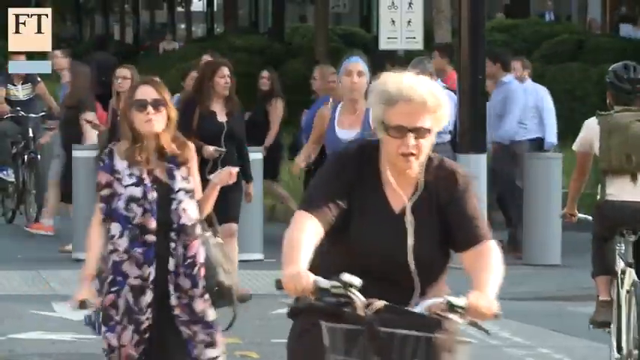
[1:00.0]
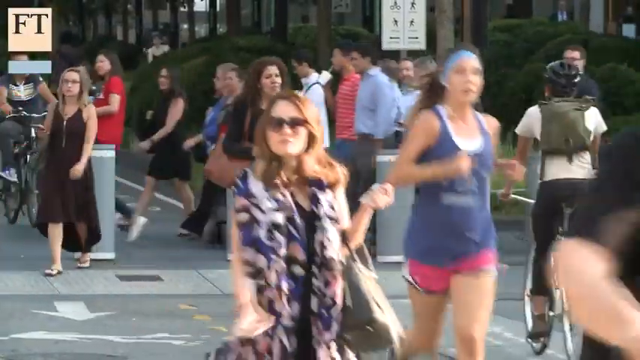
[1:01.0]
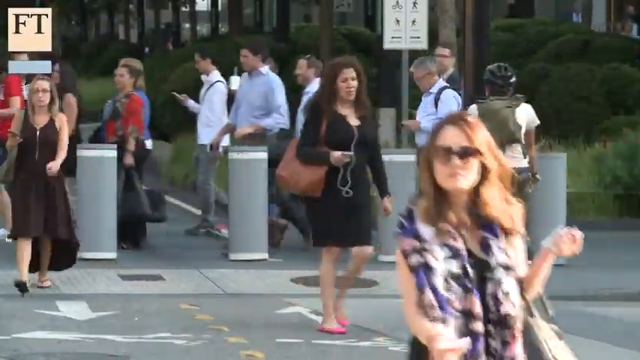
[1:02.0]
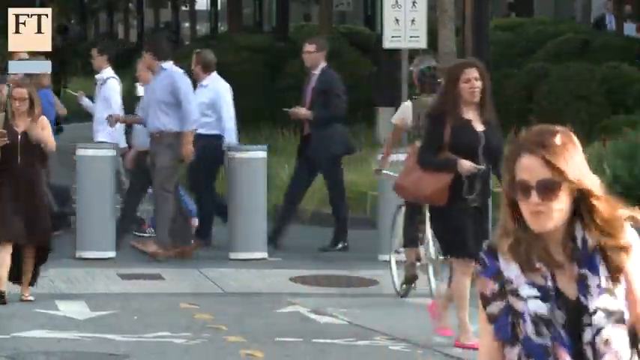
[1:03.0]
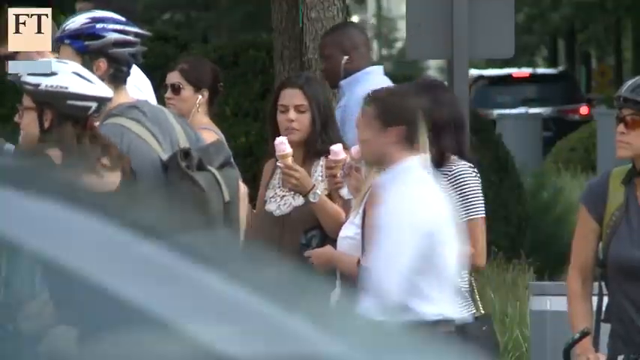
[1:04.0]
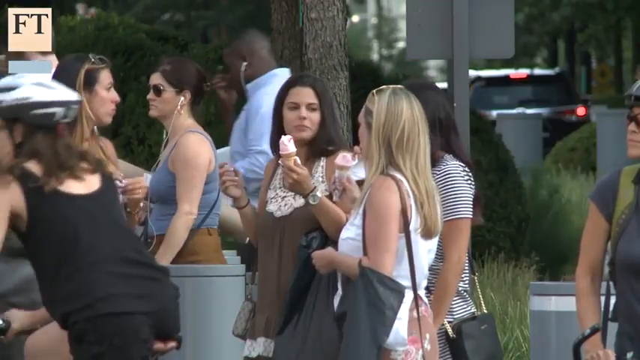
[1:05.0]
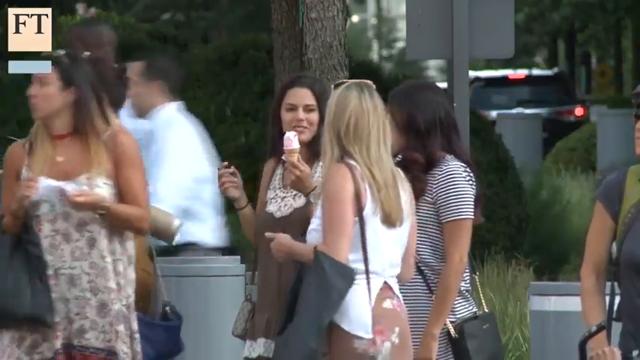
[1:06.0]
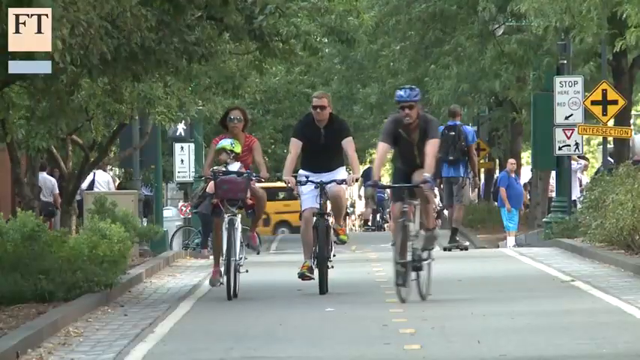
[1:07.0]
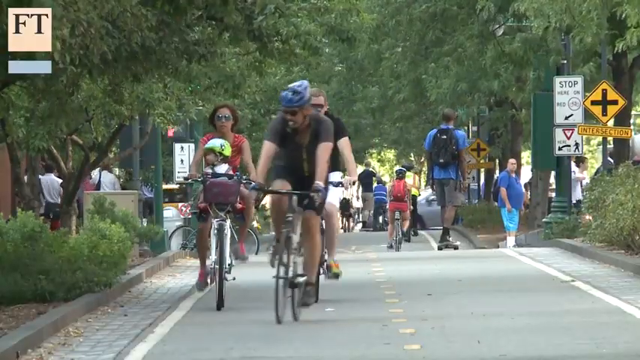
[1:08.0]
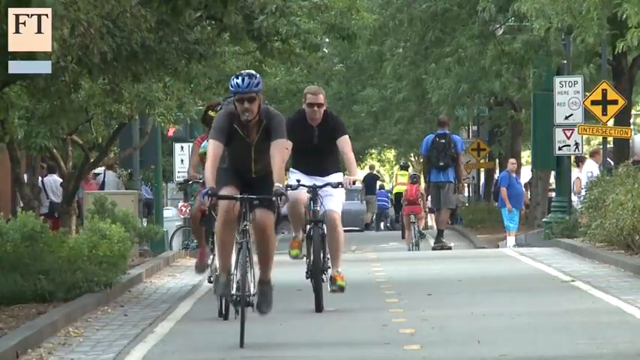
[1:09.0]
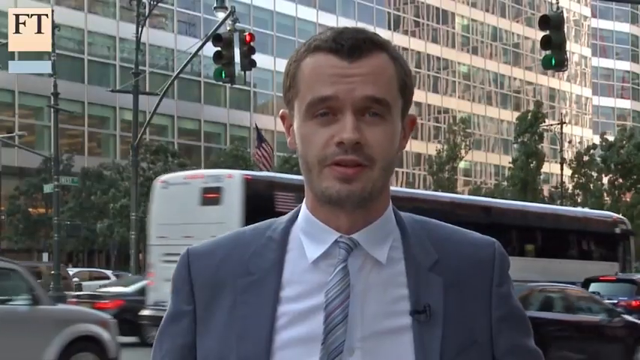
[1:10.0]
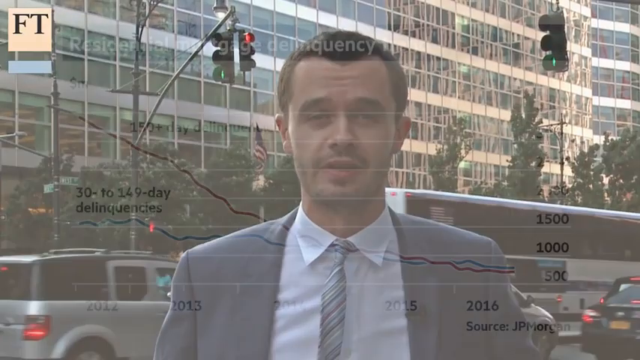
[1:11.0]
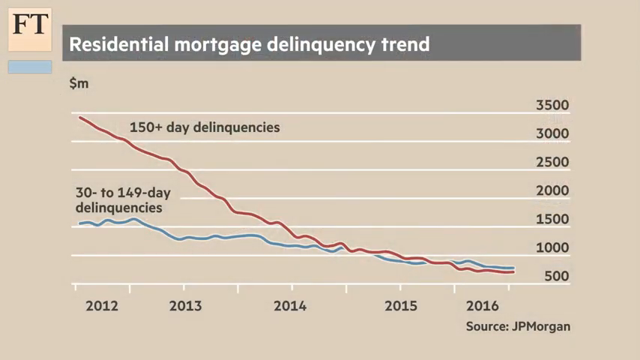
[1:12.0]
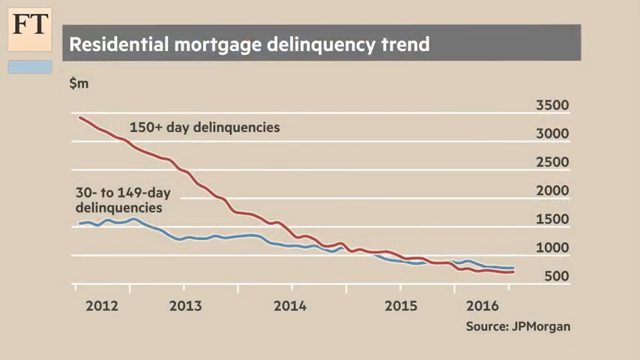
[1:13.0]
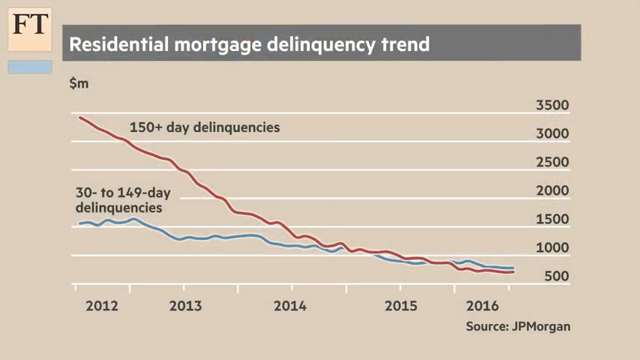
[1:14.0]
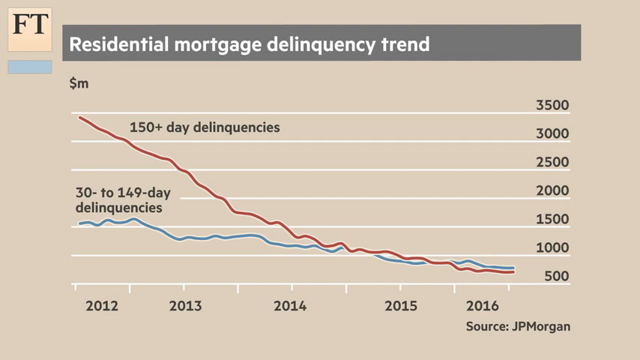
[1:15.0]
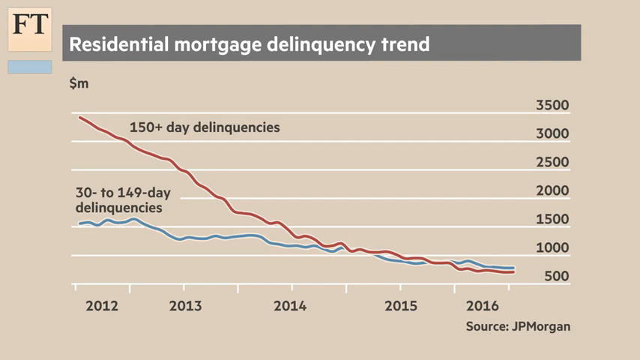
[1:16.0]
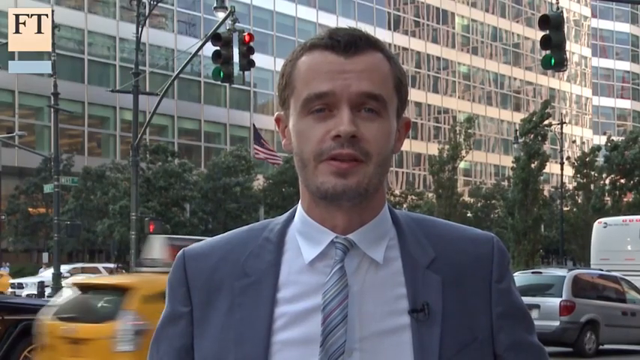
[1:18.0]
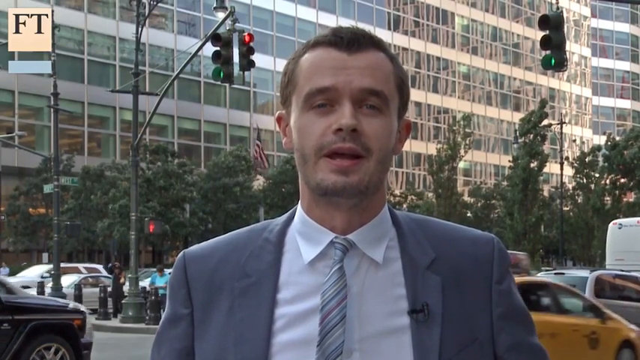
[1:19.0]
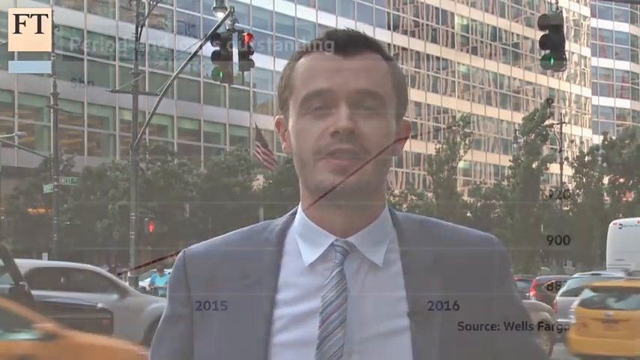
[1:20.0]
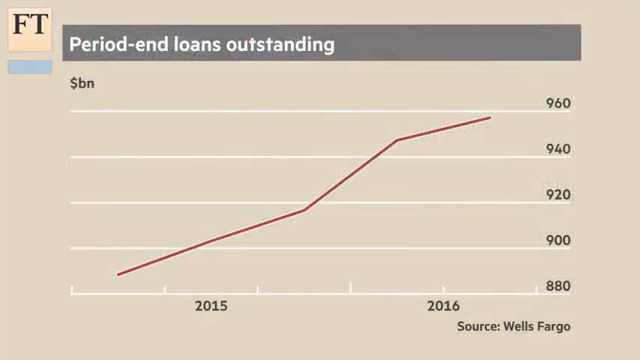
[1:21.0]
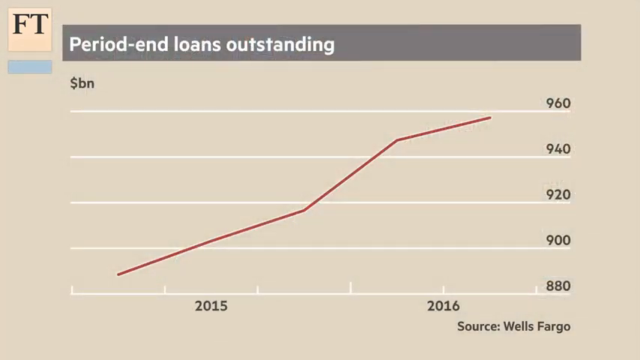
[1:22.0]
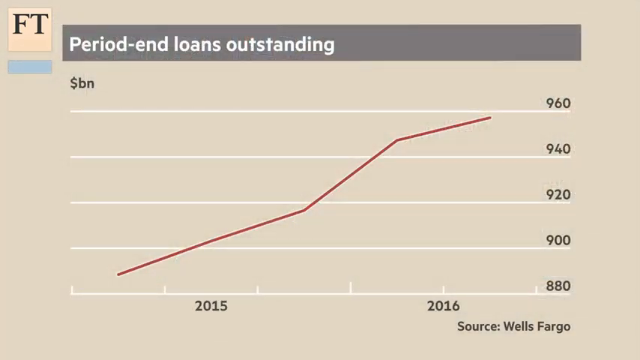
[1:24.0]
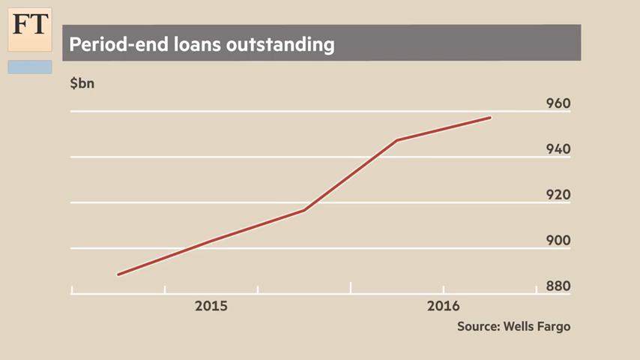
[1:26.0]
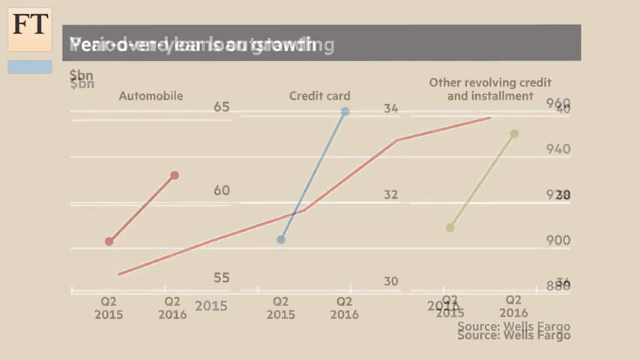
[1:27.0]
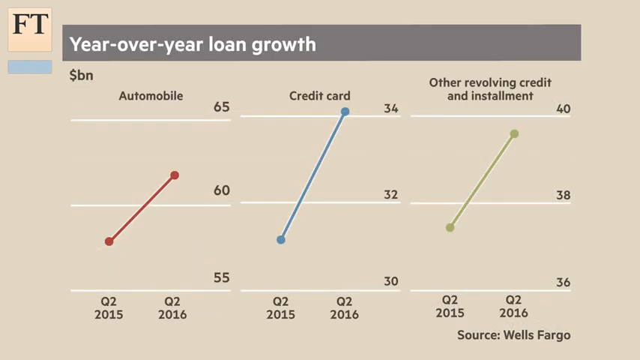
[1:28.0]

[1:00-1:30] Many people cross the street all at once: a bike rider, a jogger and a group of people, though most cross individually, passing through concrete barriers. A group of ladies have ice cream cones. People are on a bike path. The Financial Times reporter continues reporting. A graph of the residential mortgage delinquency trend shows that more people were delinquent around 2012 than in 2016, with a red line and a blue line that both seem to go down. "FT" appears in the upper left-hand corner. The reporter speaks again, and then a graph appears that says "period end loans outstanding," which has increased a lot from 2012 to 2016.